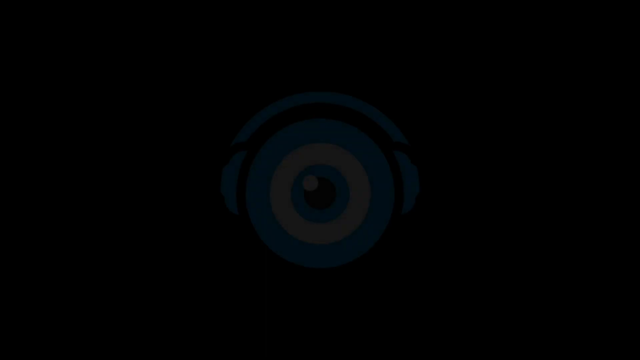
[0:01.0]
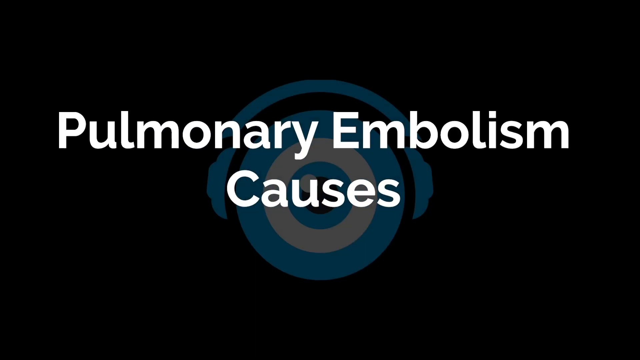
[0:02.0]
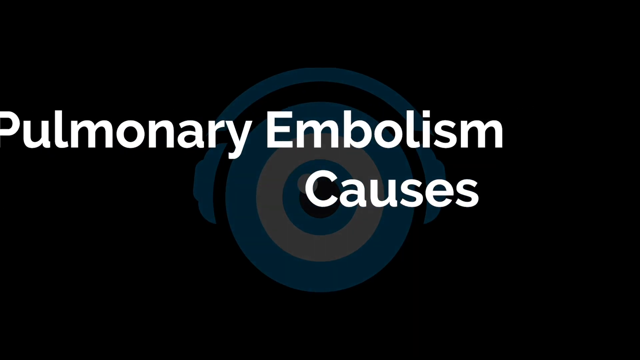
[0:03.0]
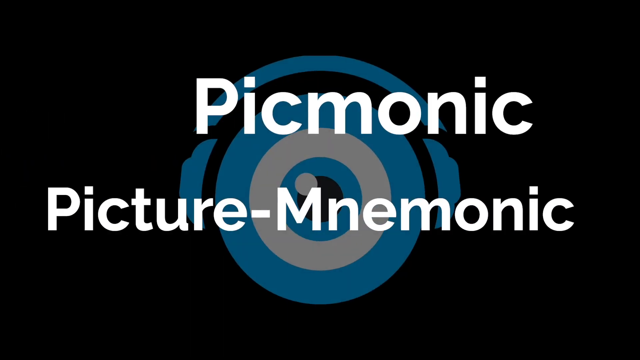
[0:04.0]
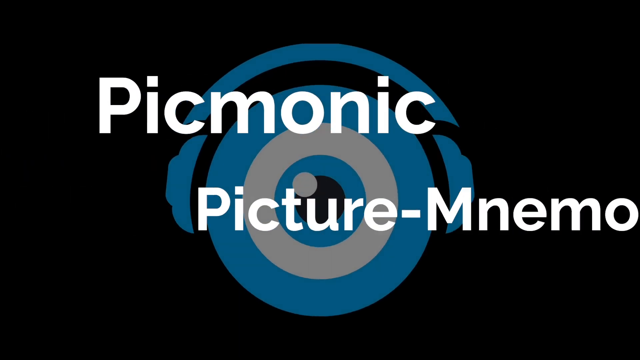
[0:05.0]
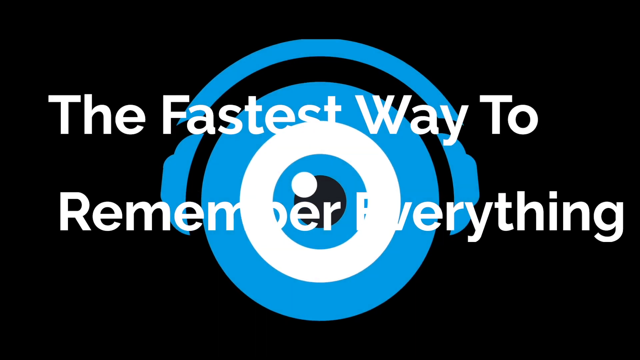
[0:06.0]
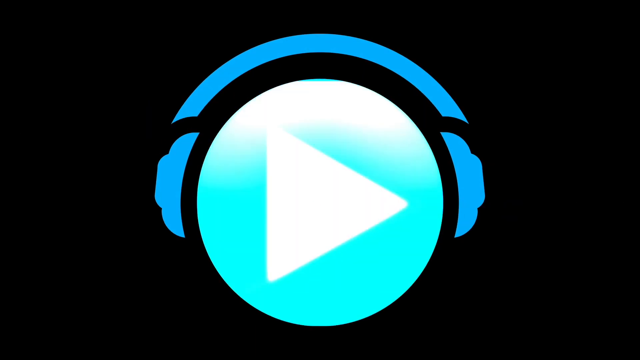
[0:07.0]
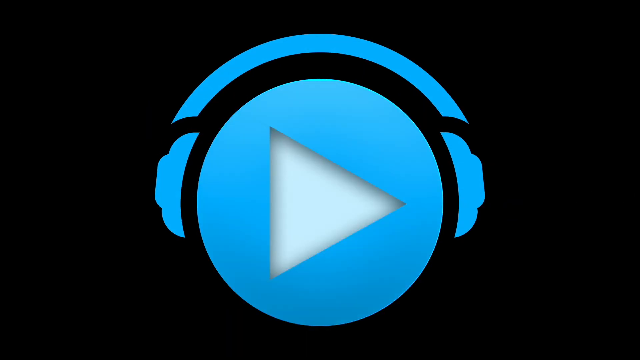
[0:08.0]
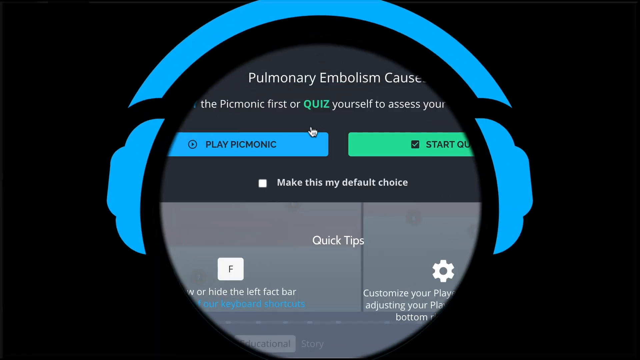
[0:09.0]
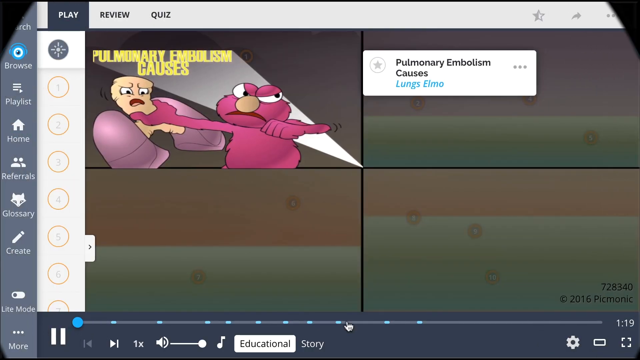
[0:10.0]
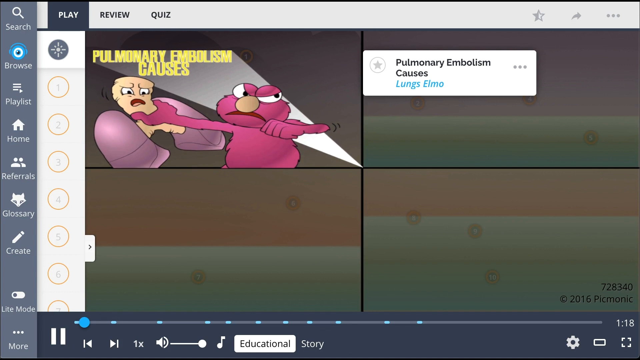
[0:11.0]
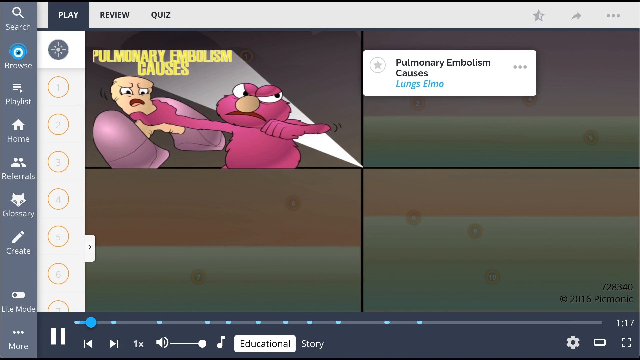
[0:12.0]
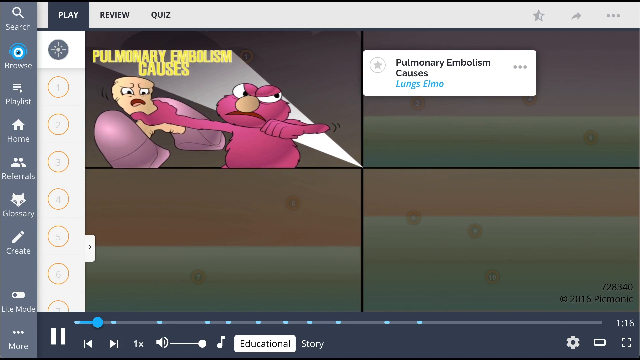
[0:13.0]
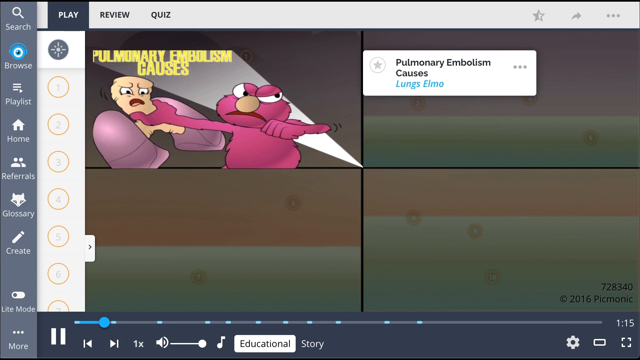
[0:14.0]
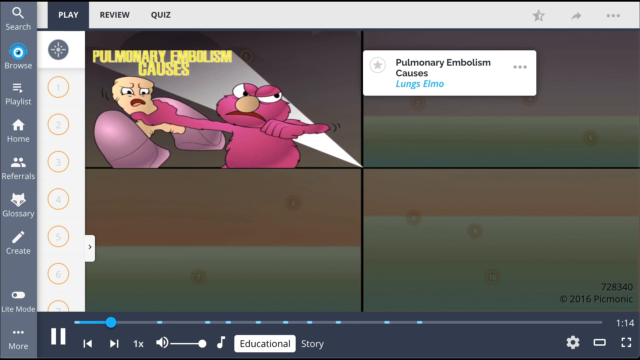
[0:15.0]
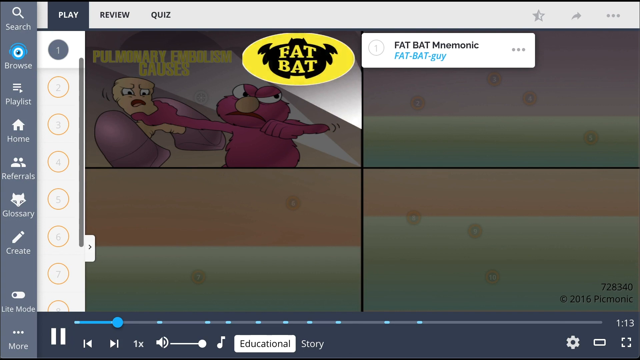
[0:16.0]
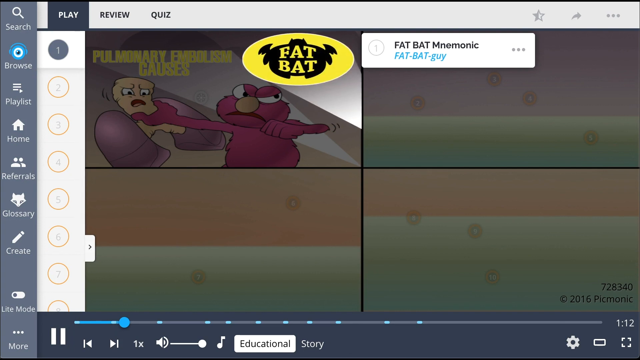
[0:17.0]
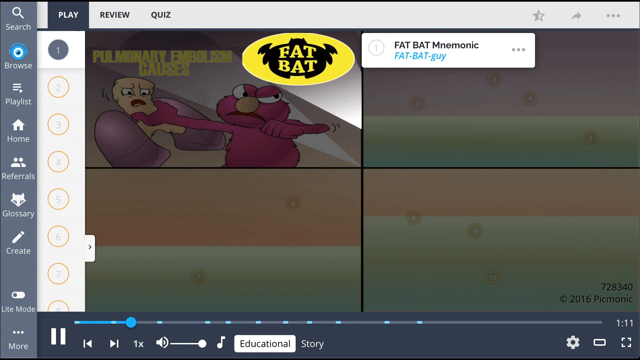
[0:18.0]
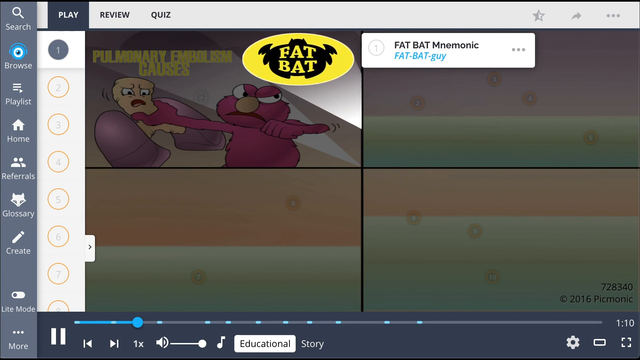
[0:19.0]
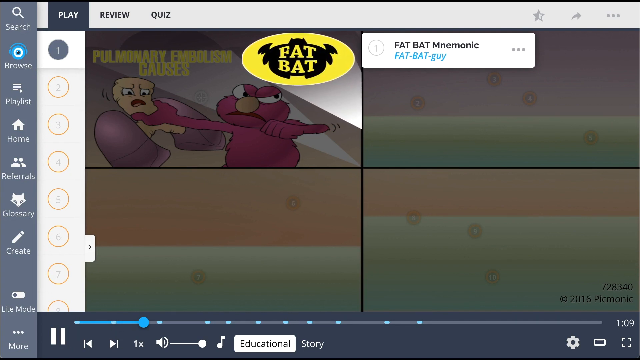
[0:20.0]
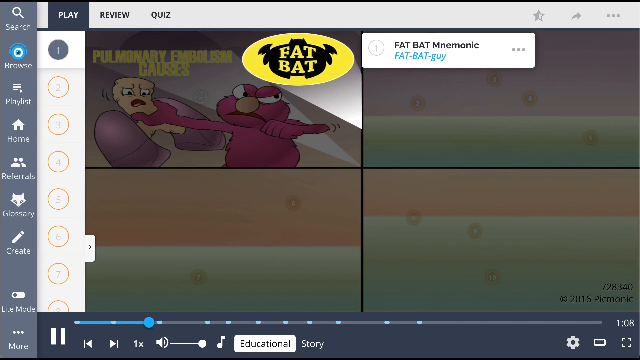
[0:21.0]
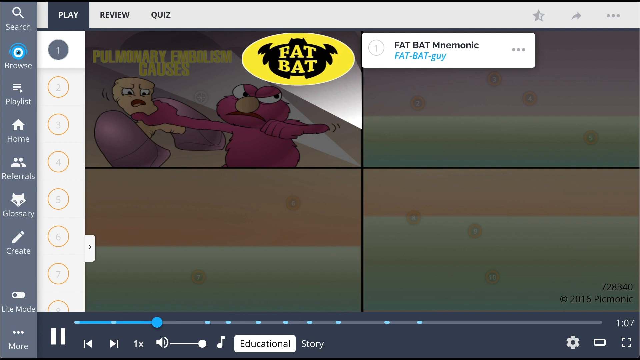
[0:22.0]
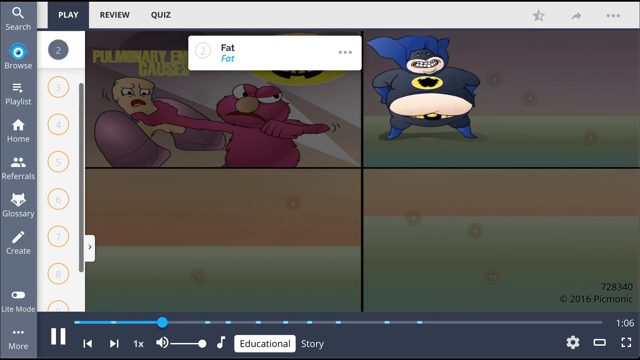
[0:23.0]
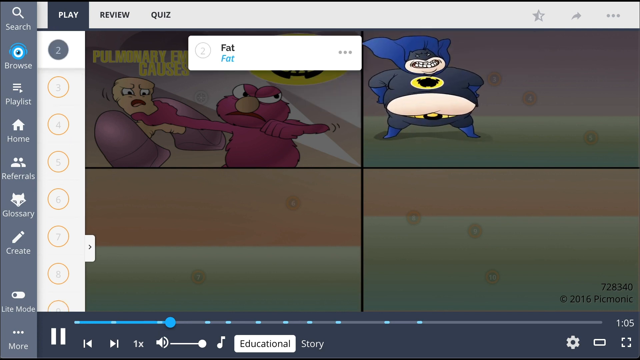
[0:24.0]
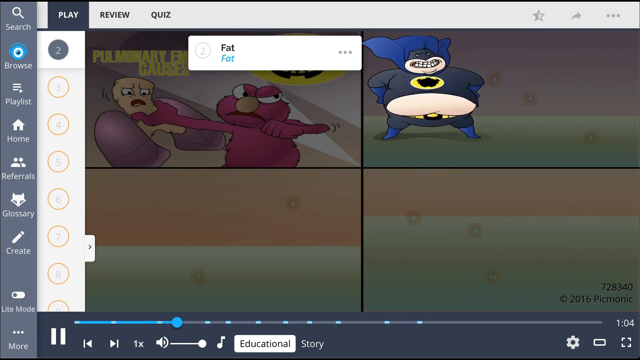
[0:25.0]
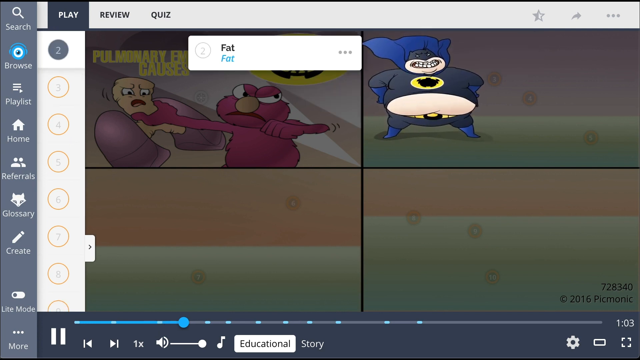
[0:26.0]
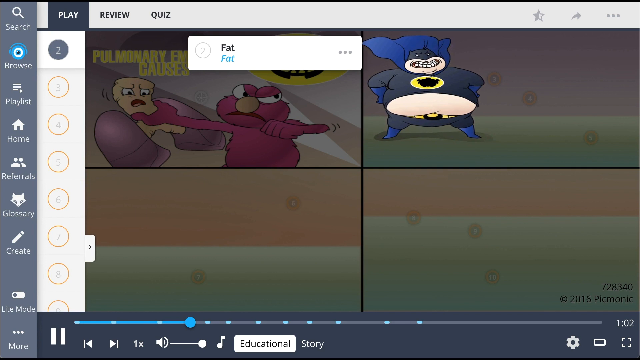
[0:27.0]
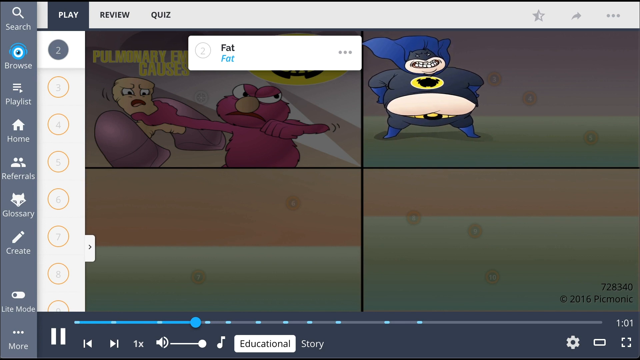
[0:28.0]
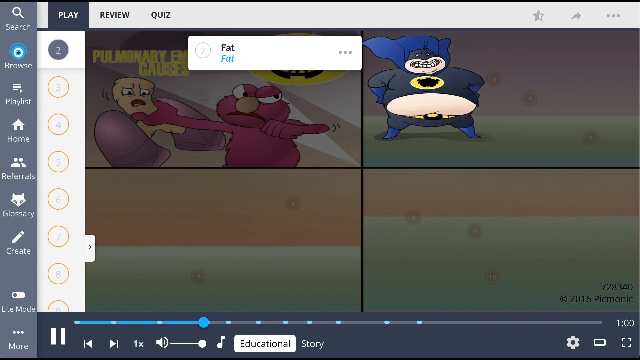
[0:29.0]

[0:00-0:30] On a black background there is an eyeball wearing headphones, colored blue and white, with white text overlaid that reads "pulmonary embolism causes." The words "picmonic" and "picture-mnemonic" appear, followed by "the fastest way to remember everything." Something grows bigger and turns into a play button. A screencast of a computer screen follows, with software pulled up in which an Elmo is beating up something that connects the lungs. The Elmo attacking the organ is grayed out and Fat Bat comes in: a yellow oval with a black guy with wings on it, who looks like he has ears, with the words "Fat Bat" overlaid. There is also a blue one with a black guy with wings on it. In another scene right by the Elmo, a fat Batman appears.